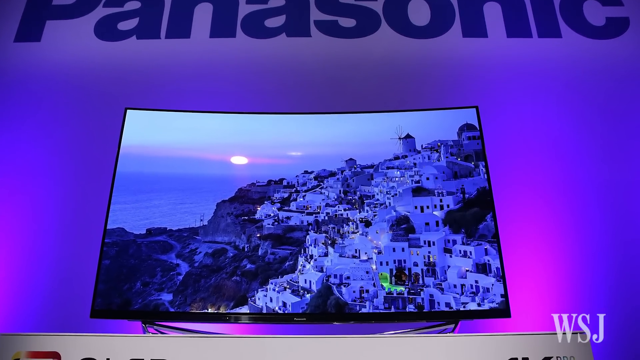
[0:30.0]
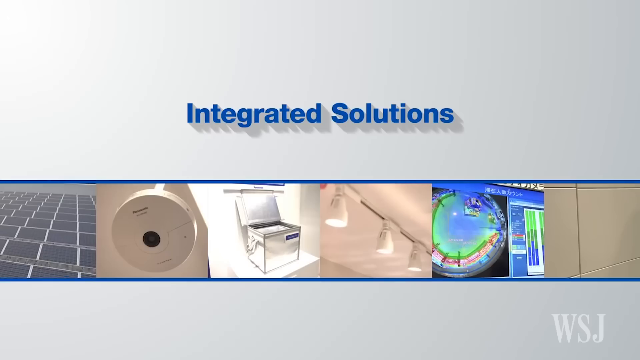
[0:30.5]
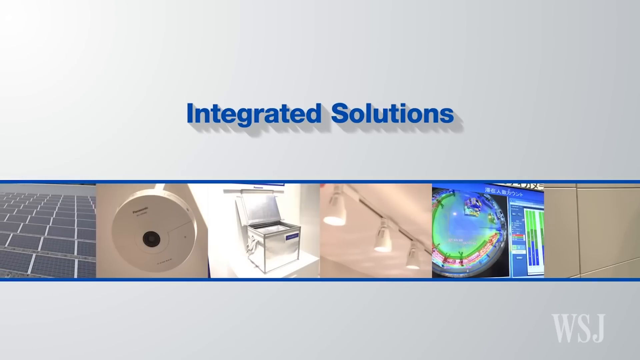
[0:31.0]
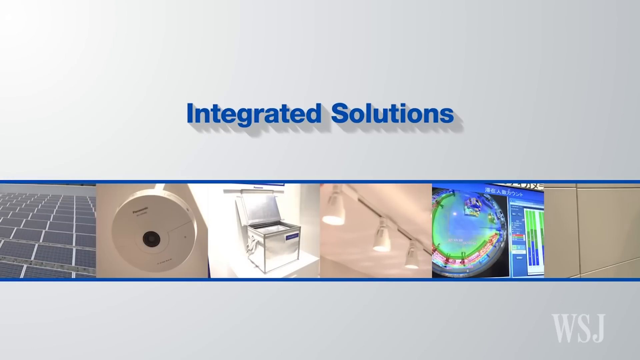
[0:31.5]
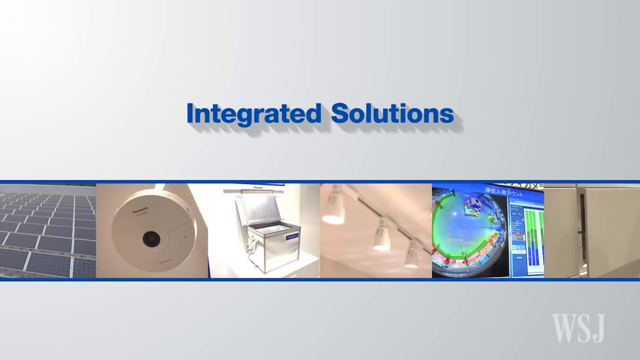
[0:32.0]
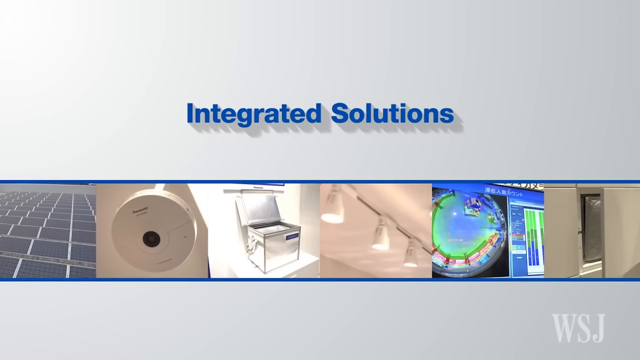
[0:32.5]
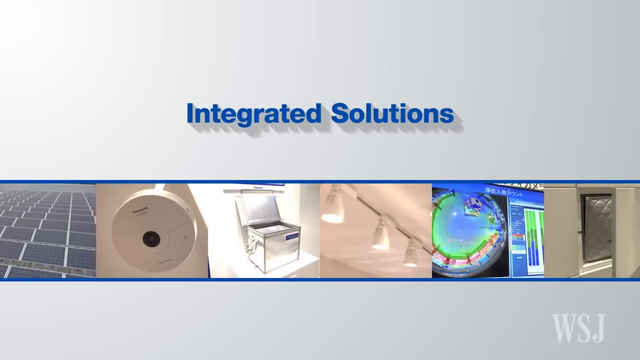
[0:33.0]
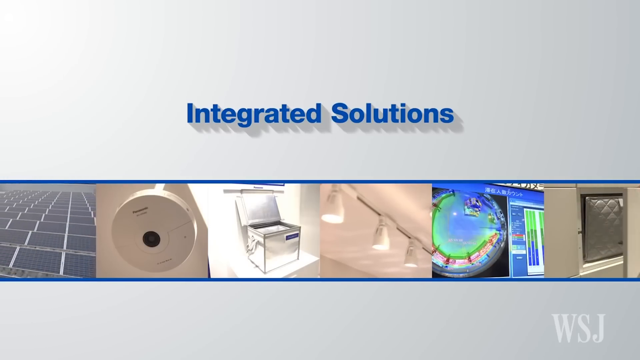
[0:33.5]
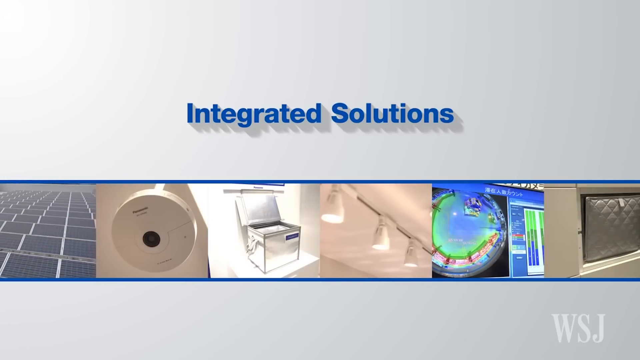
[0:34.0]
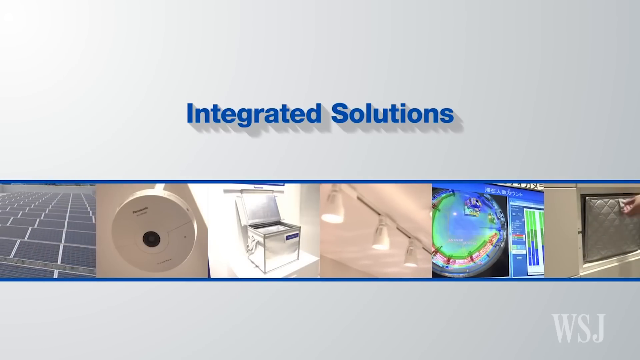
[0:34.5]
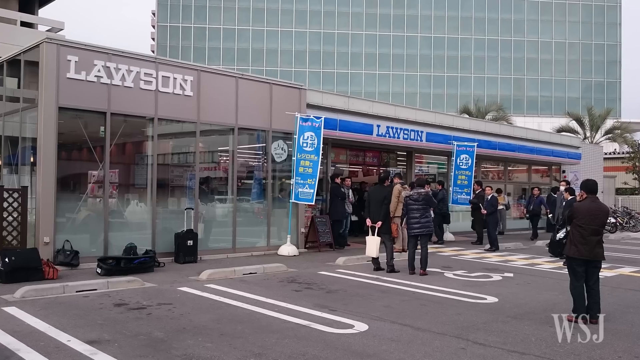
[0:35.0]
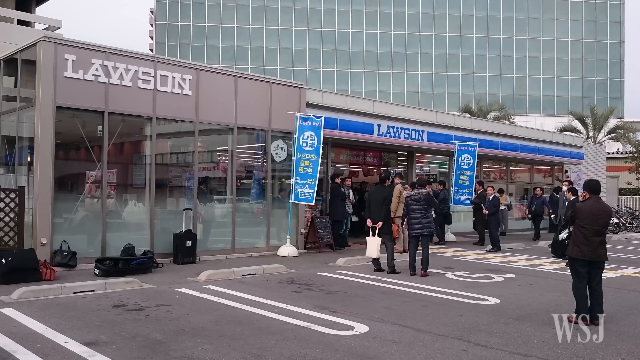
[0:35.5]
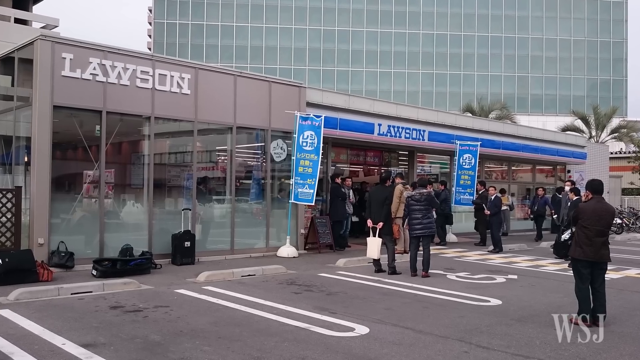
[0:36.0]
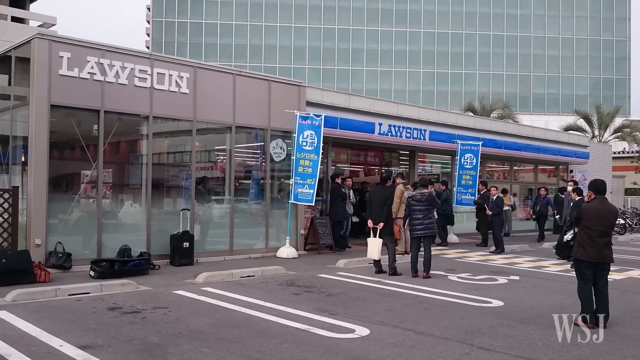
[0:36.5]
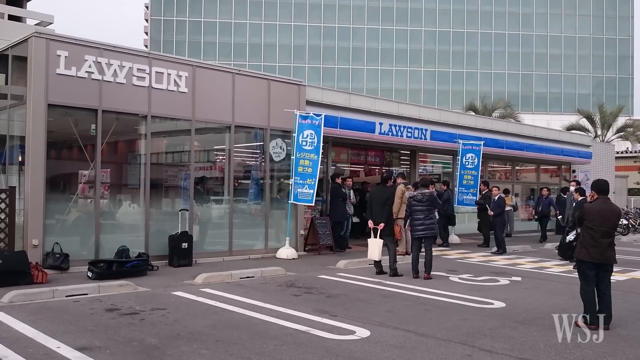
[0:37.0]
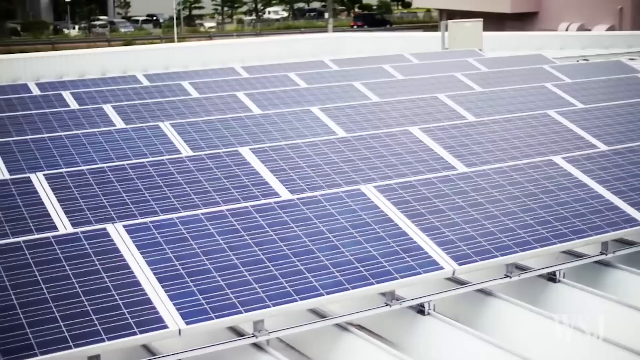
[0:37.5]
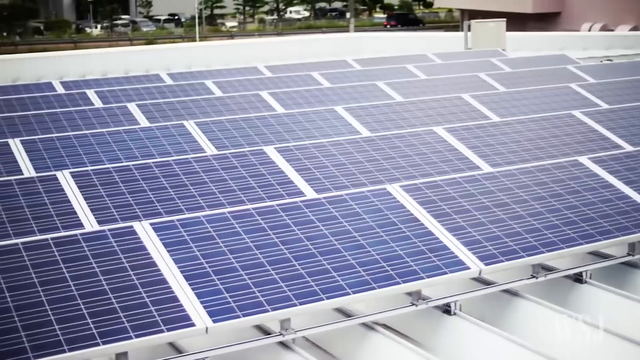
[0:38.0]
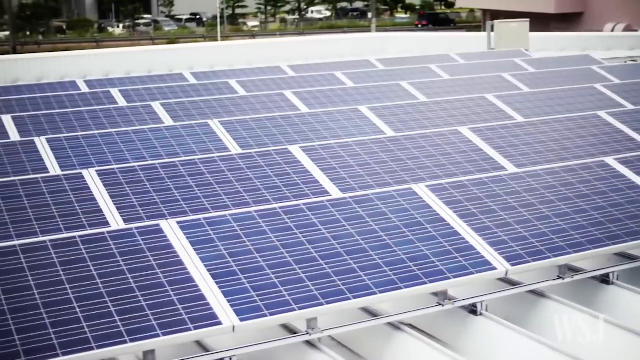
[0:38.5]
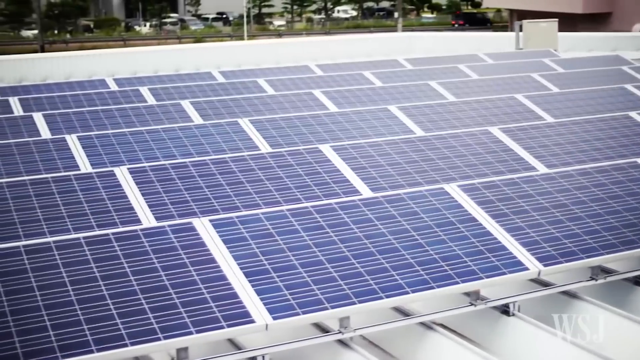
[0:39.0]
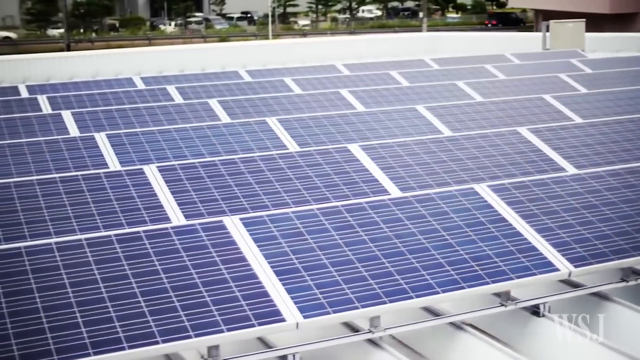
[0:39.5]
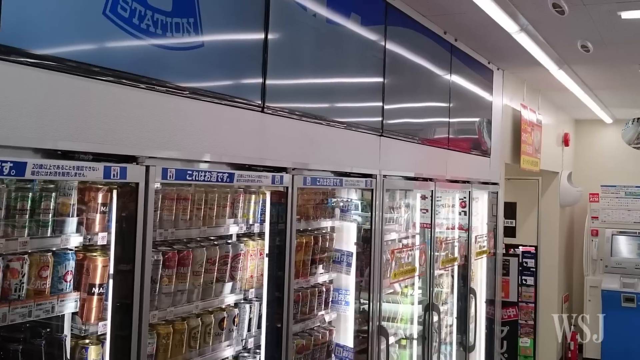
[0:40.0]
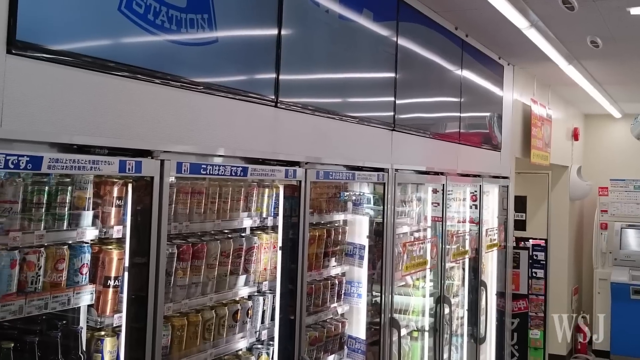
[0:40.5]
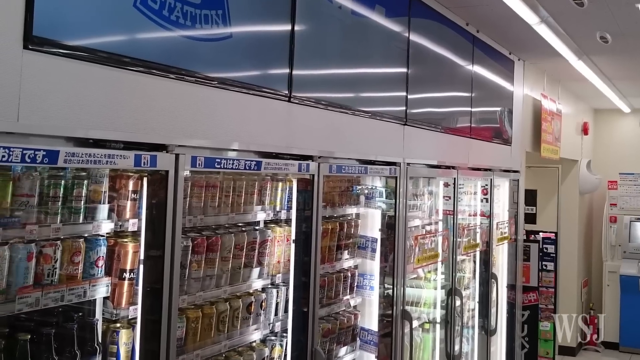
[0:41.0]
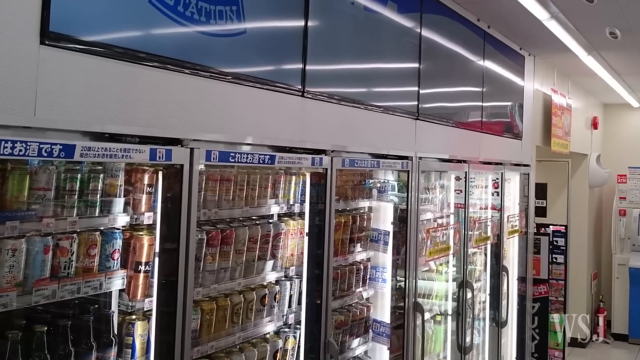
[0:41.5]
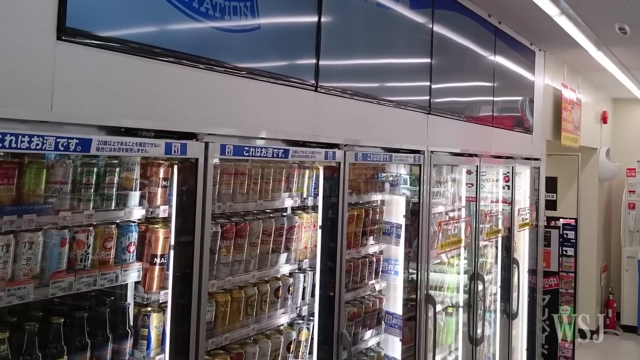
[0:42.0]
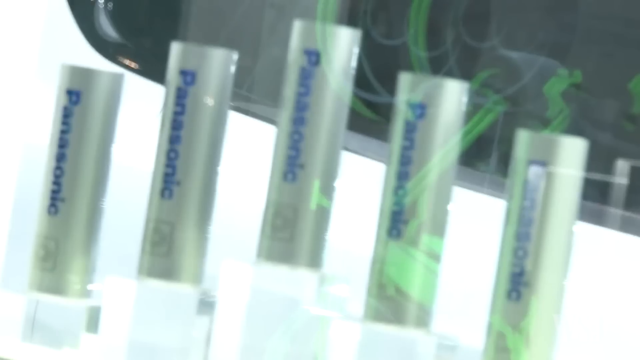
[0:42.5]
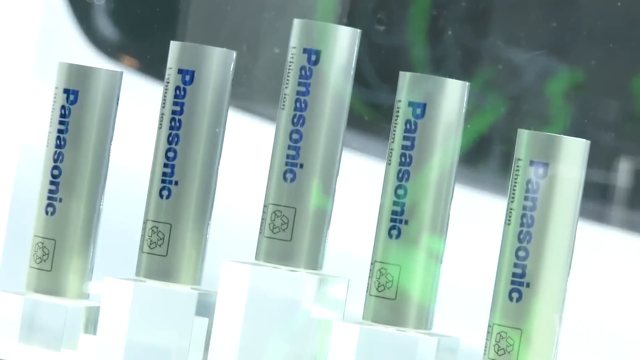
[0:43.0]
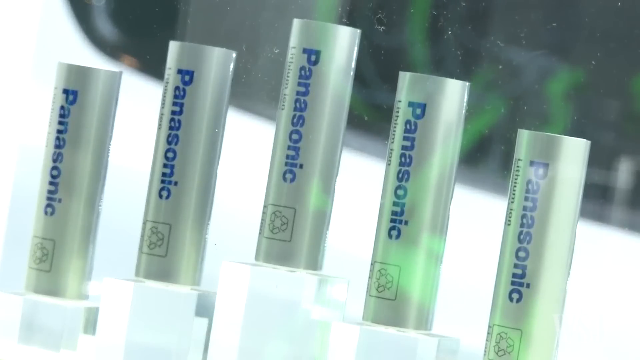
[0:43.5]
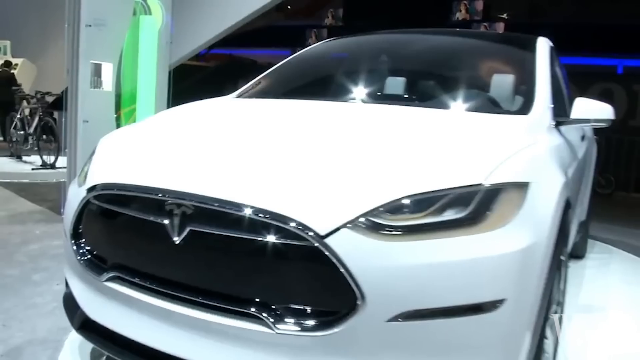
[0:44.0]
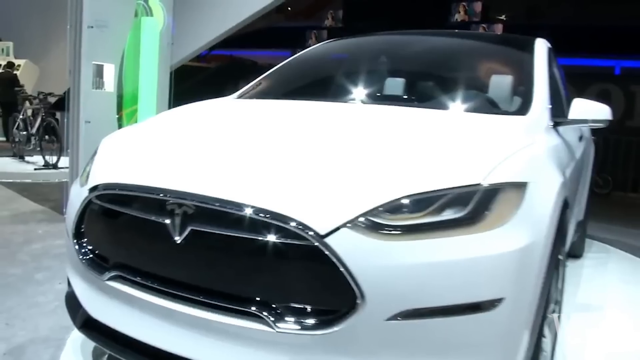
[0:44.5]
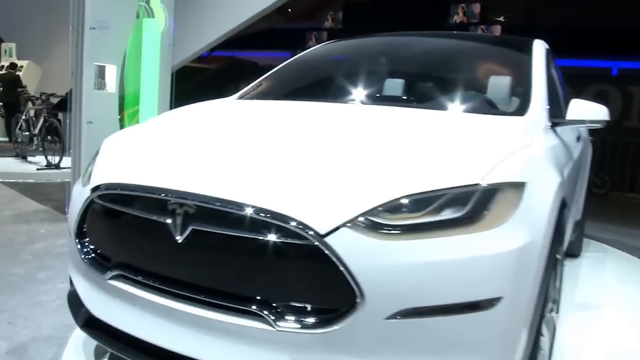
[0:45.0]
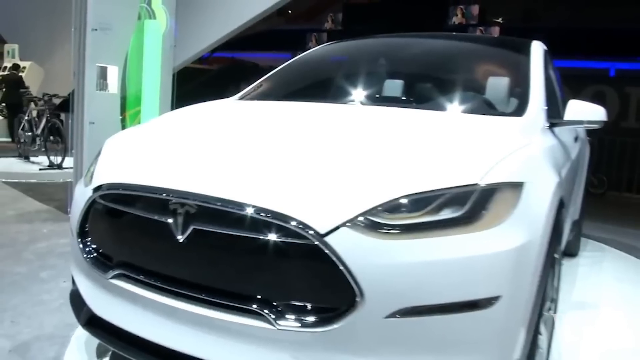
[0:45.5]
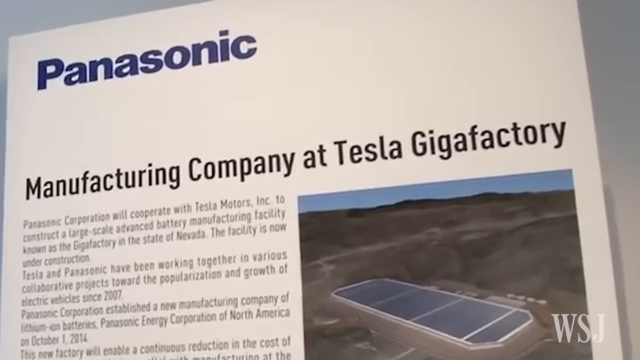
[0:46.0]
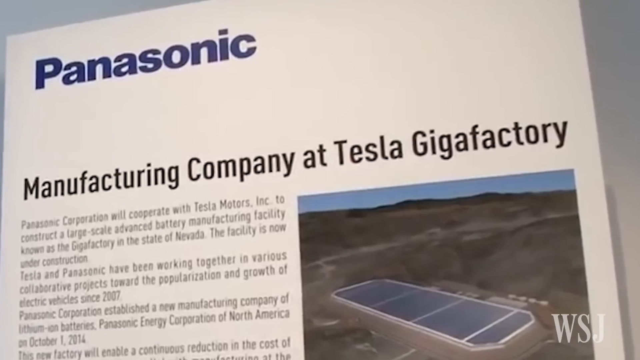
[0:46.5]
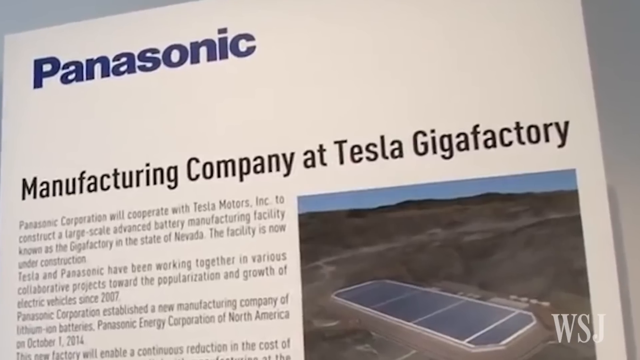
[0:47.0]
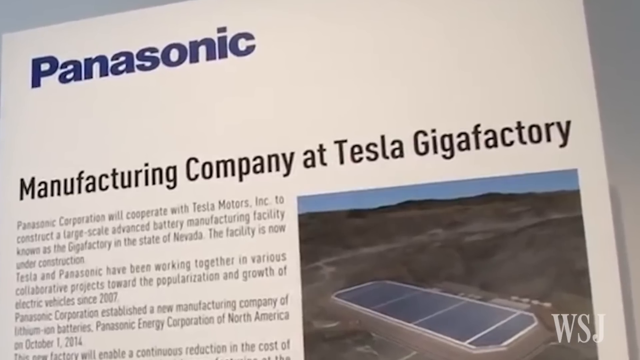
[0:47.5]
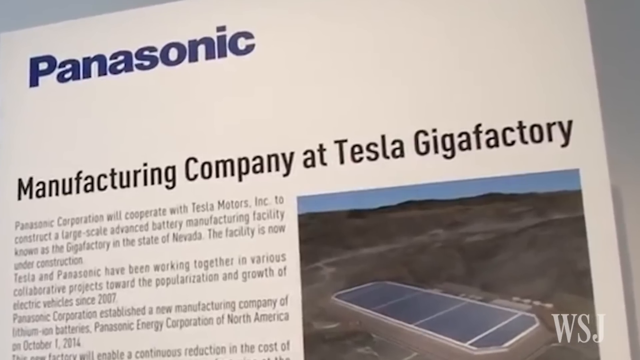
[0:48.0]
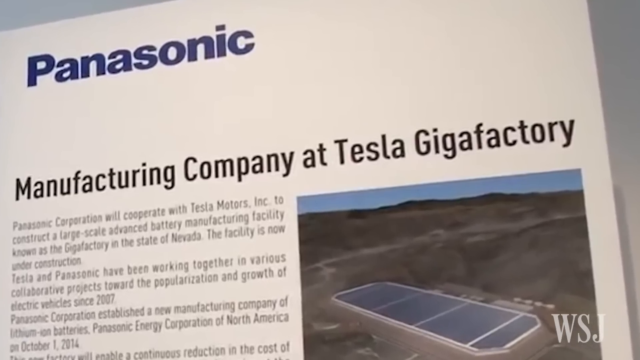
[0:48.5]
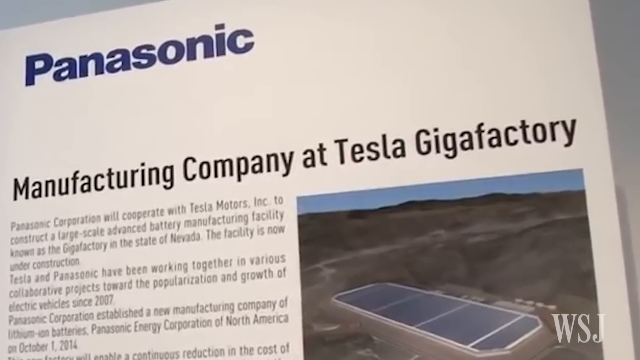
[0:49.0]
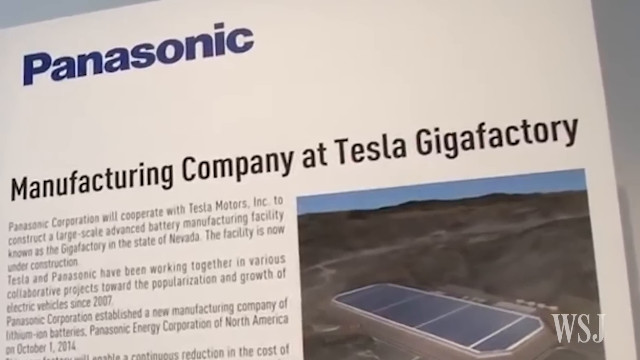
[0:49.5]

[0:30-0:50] The video changes from the Panasonic screen with its purple background to a white background with "Integrated Solutions" in blue in the lower middle. Below it, six square pictures sit in a row, forming one long rectangle across the screen: solar panels, an alarm, a silver box, lights up on the ceiling, what looks like a differently colored graph, and something else different. Next is a building with people standing out in front and blue Lawson signage at the top. On the building next to it, which has glass windows, "Lawson" appears in white in the very top left corner. Behind these buildings, part of a tall building with all its windows is visible. People are lined up at the entrance of the blue Lawson. The video then scans over many solar panels. Inside a convenience store, various sodas are lined up in cases. A bunch of batteries appear, all labeled "Panasonic". A fancy white car is shown, followed by a book that says "Panasonic Manufacturing Company at Tesla Gigafactory".